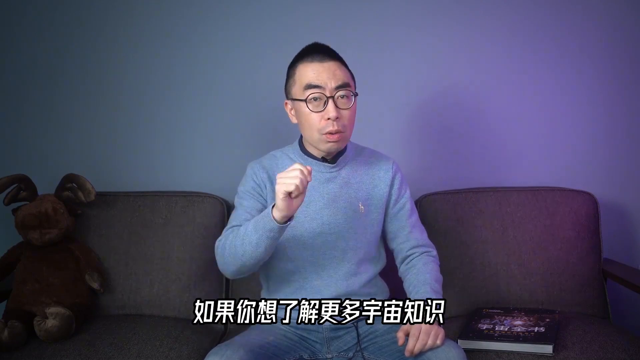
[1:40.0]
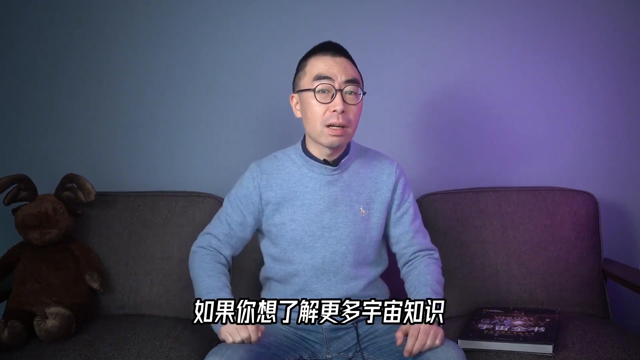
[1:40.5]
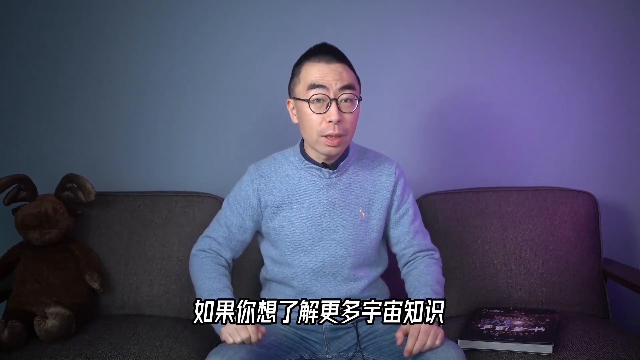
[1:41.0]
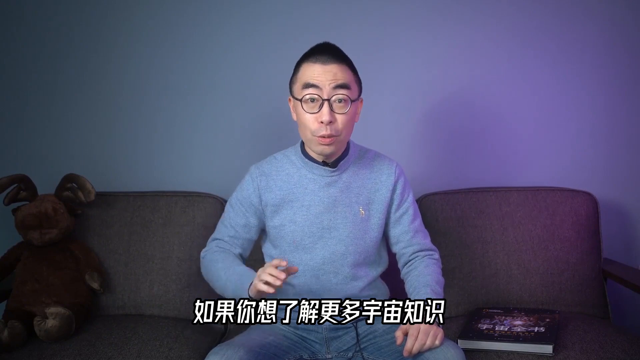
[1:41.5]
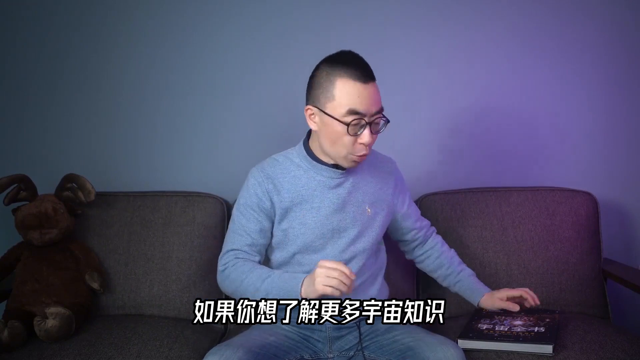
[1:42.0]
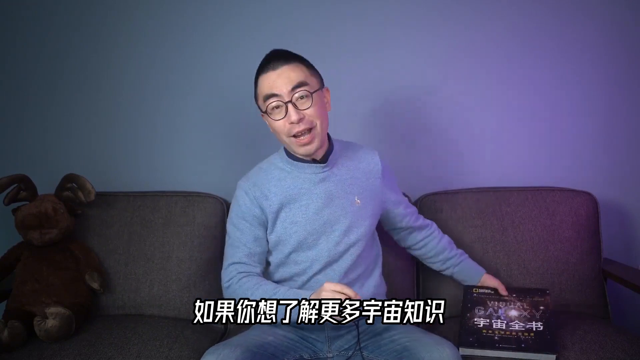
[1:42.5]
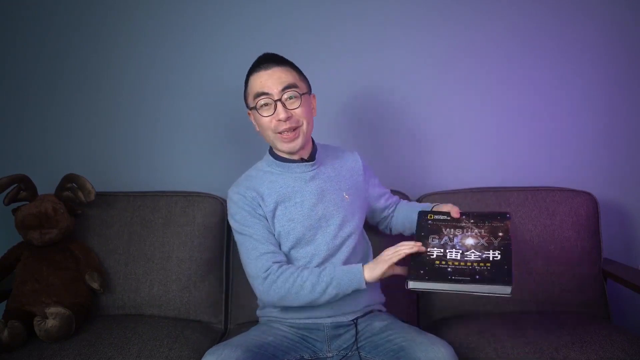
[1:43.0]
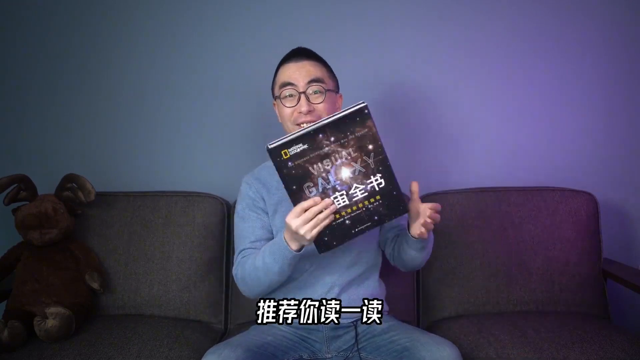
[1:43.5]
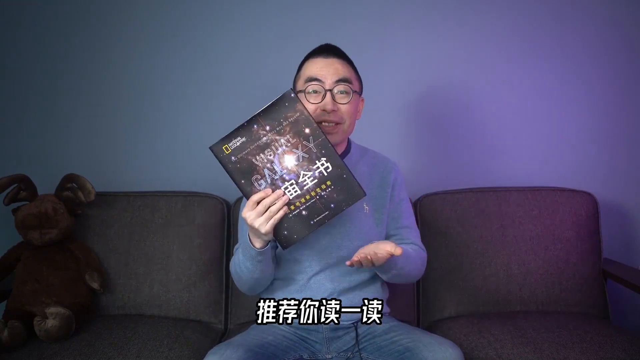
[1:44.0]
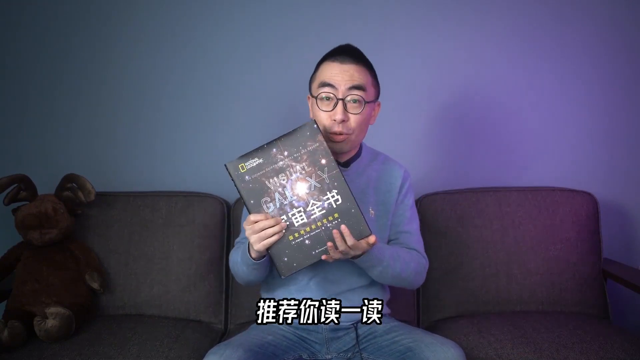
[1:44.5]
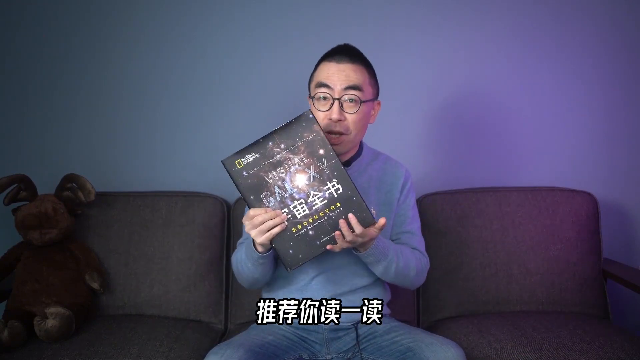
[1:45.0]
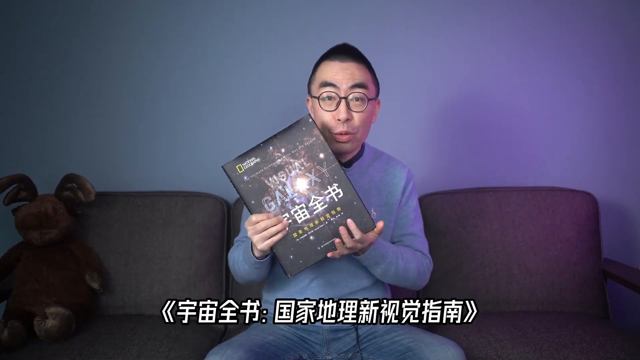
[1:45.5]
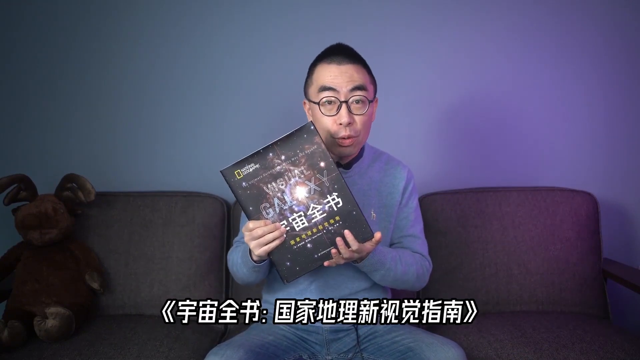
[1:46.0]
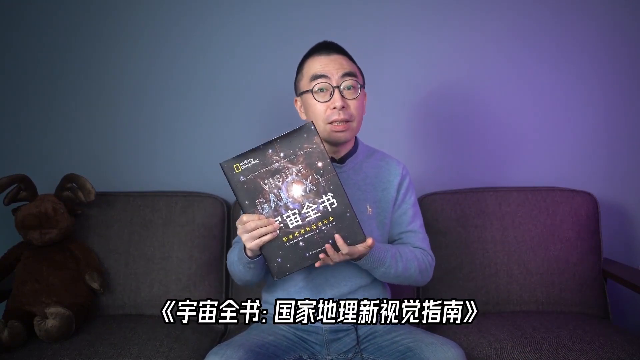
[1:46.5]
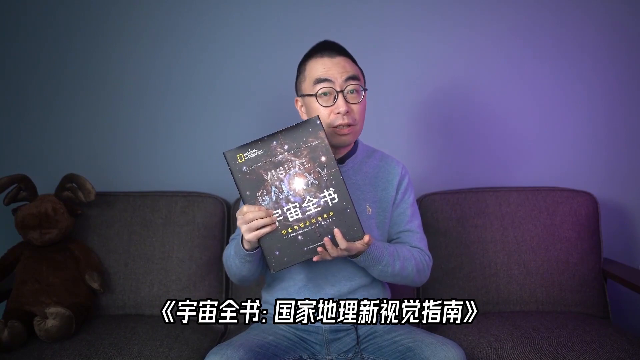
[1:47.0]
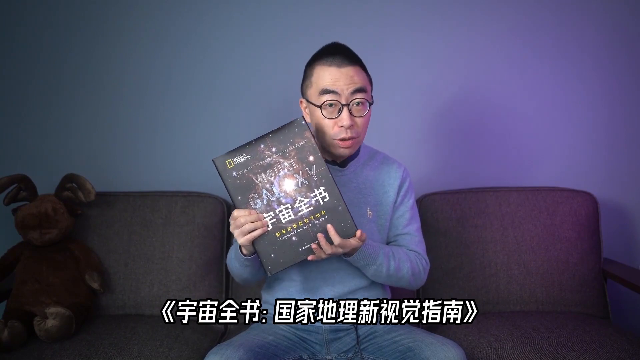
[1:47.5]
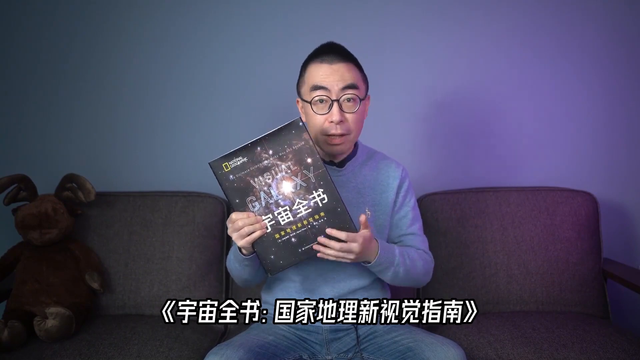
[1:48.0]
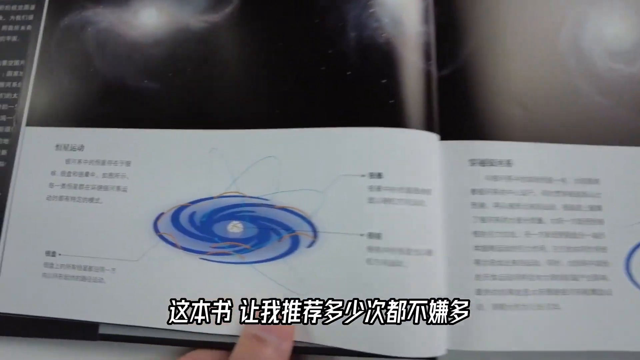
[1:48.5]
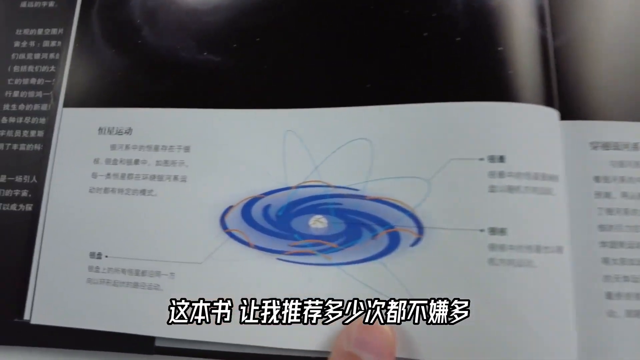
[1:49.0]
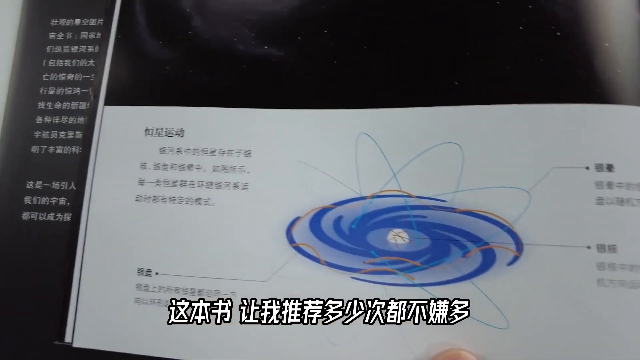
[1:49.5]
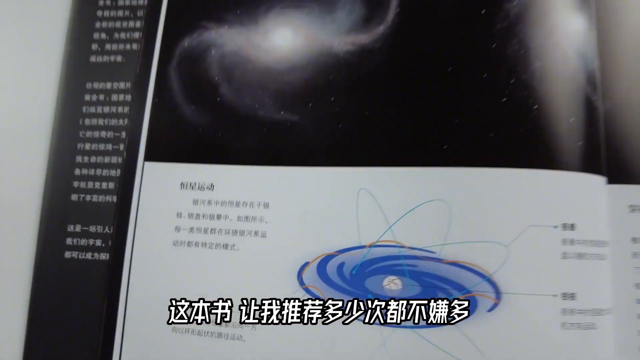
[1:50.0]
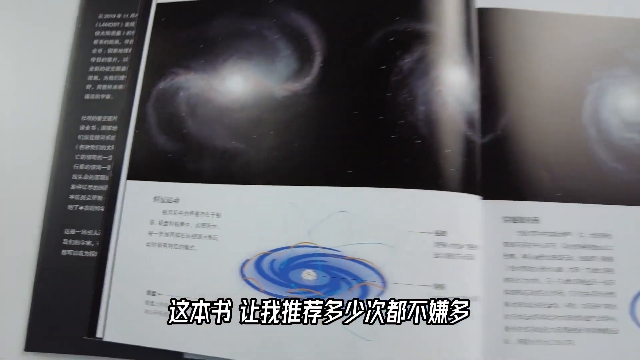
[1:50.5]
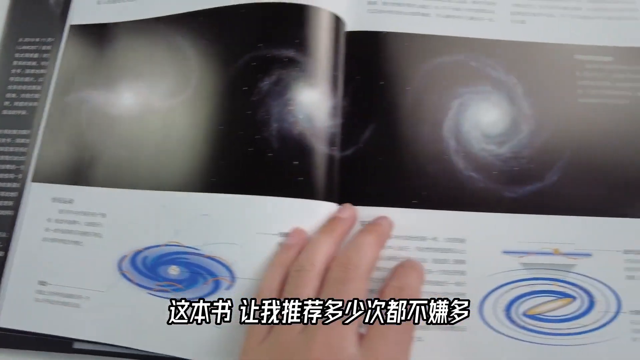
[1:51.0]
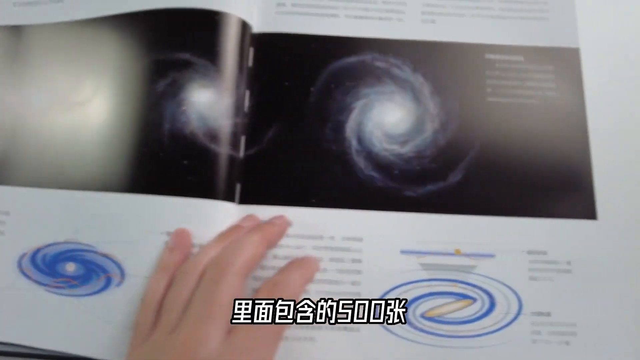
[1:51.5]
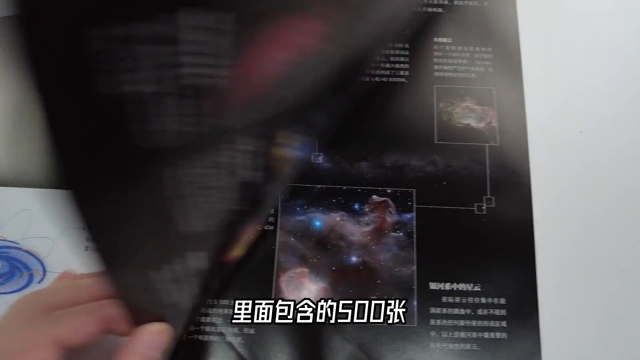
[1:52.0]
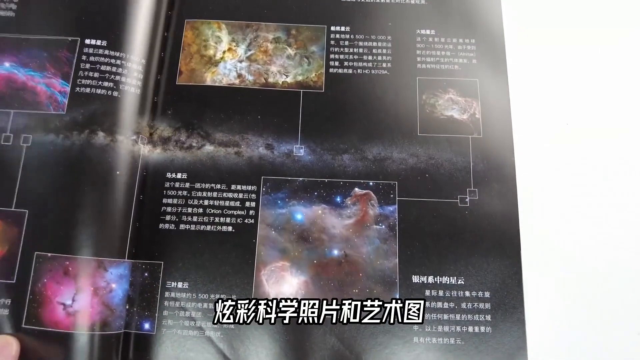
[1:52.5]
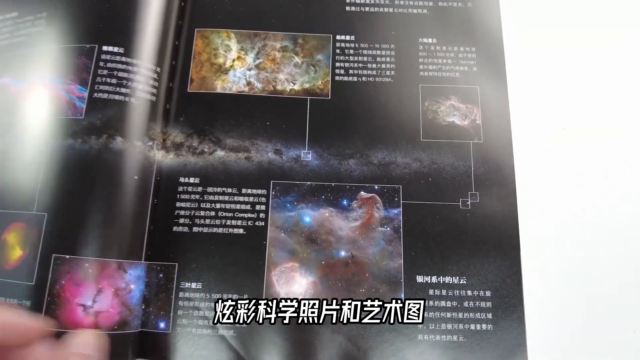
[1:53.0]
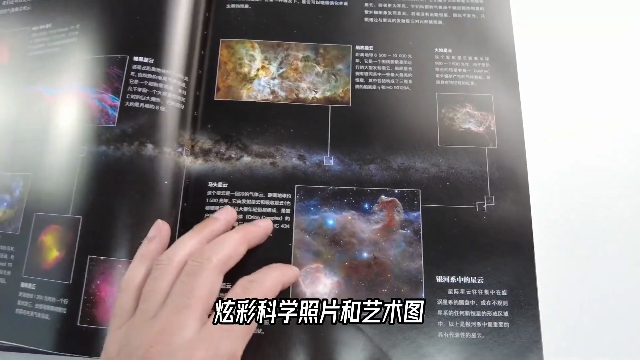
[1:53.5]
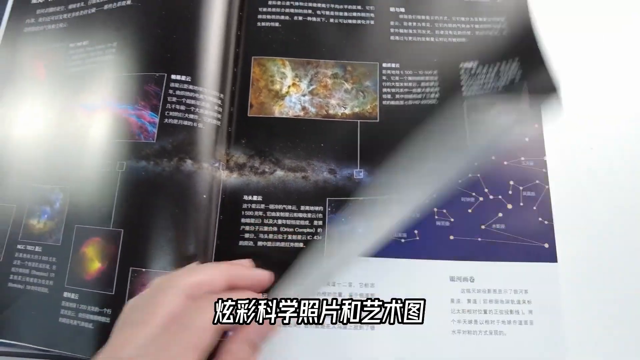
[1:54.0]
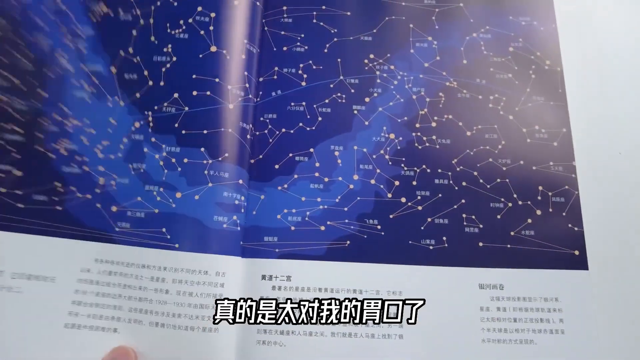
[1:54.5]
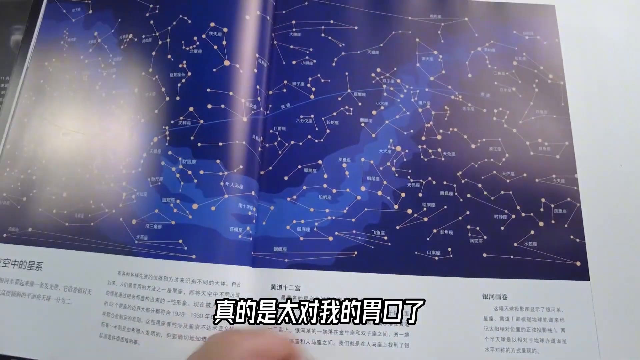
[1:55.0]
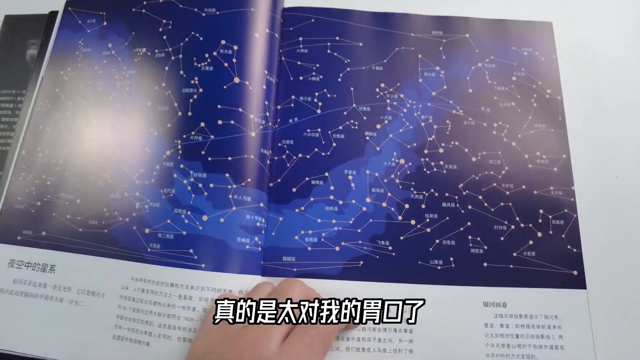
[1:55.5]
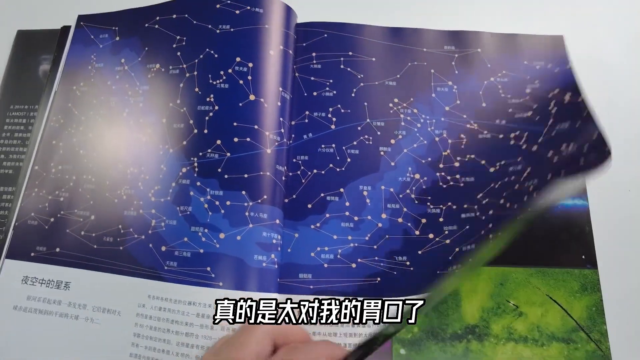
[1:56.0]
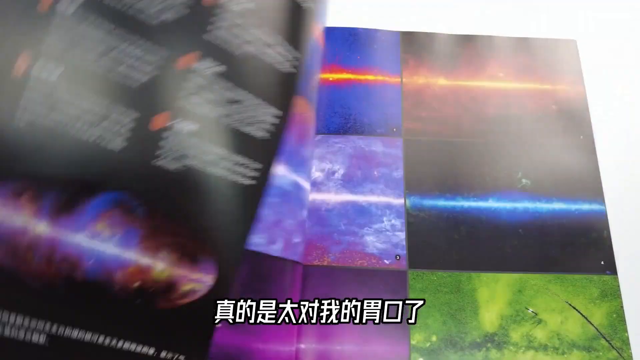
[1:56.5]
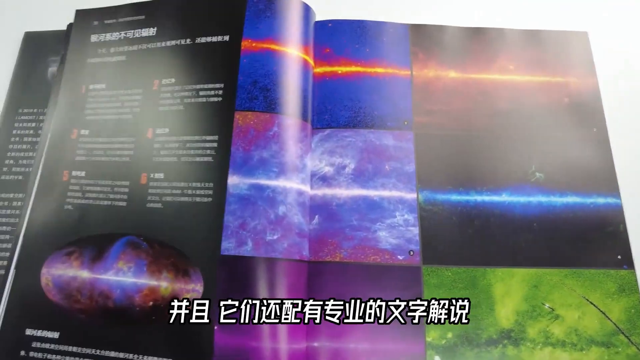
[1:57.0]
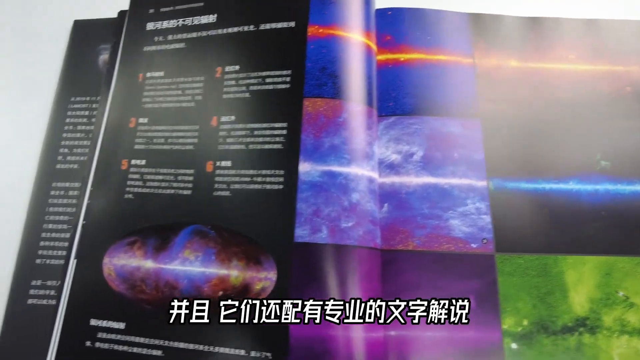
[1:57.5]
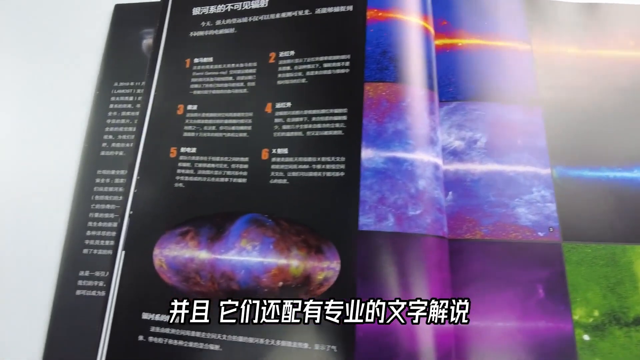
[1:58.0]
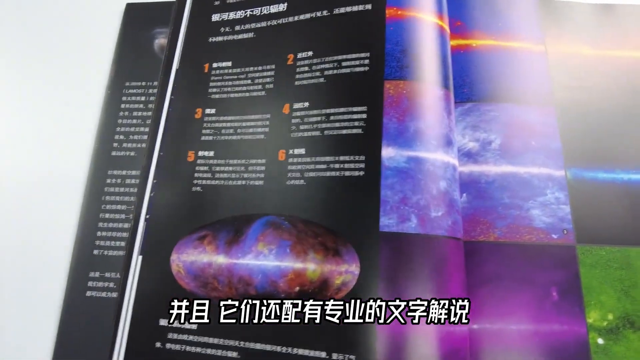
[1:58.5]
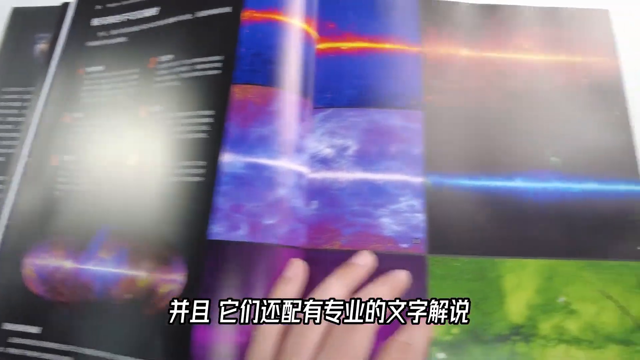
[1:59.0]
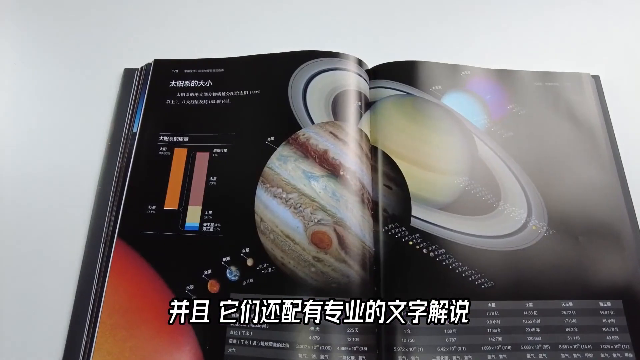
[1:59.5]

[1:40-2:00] An Asian man sits on a long gray couch, with a brown stuffed animal that might be a moose sitting to his left. He wears a long-sleeved gray sweater and large, round, black-framed glasses, and has short black hair and thick, black, bushy eyebrows. He speaks to the viewers. To his right on the couch is a large black book whose cover shows the National Geographic logo, photos of outer space and Chinese text across it. He picks up the book and shows it to the audience. The view then zooms in on various pages of the book, showing its contents; the first is an illustration of a planet with its surrounding orbit.